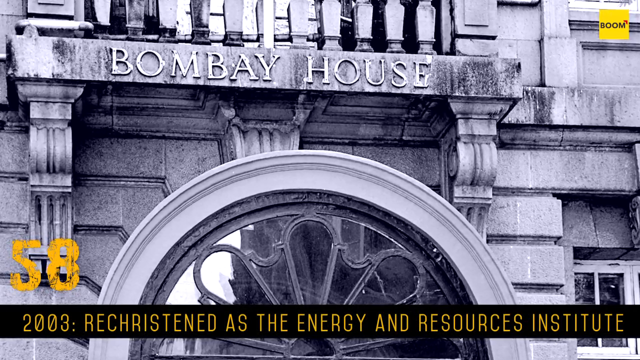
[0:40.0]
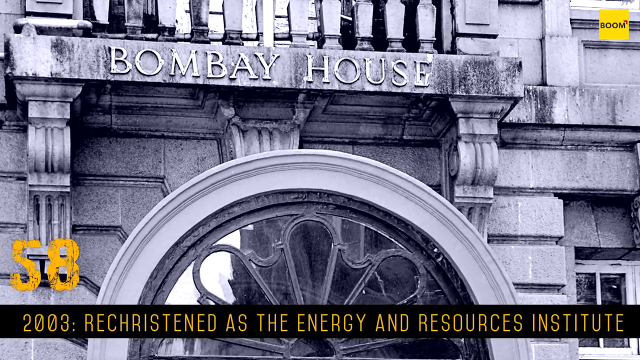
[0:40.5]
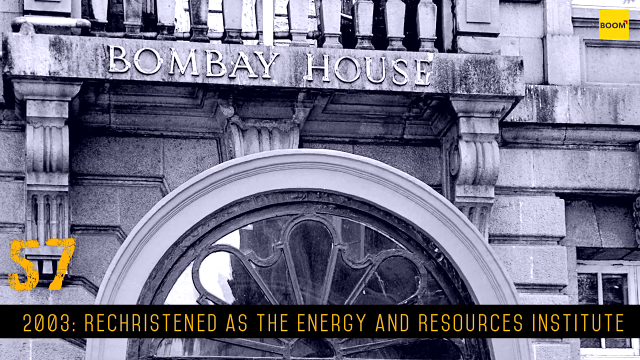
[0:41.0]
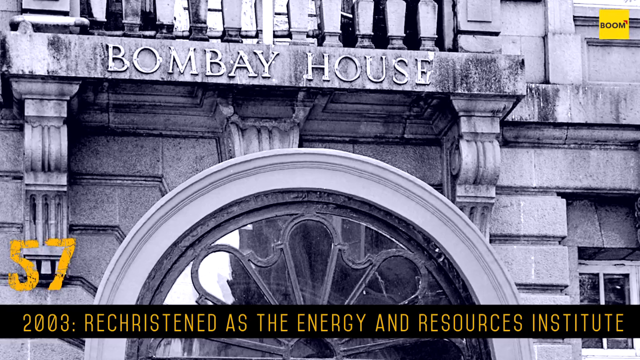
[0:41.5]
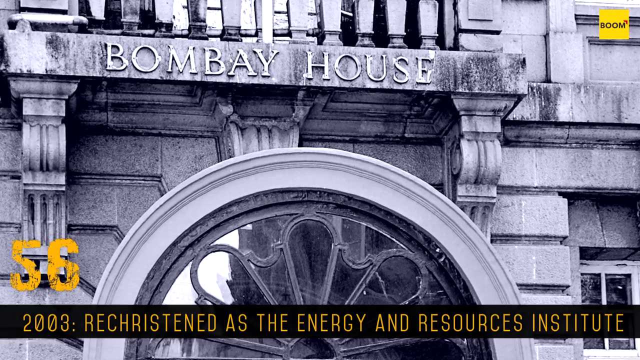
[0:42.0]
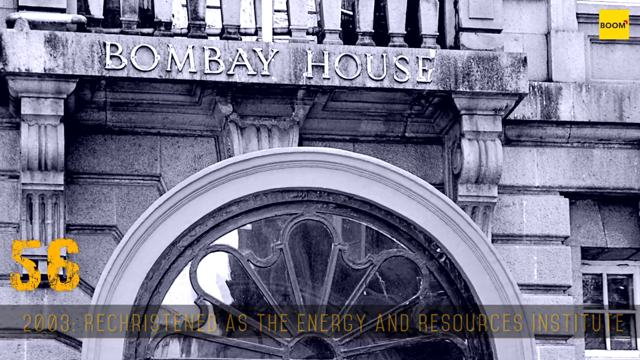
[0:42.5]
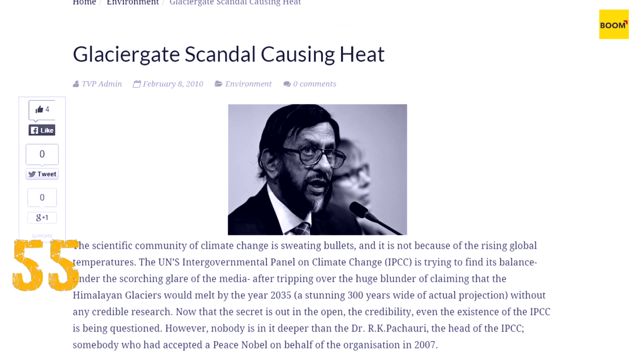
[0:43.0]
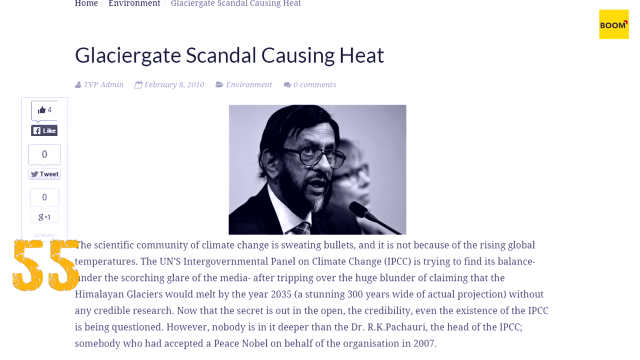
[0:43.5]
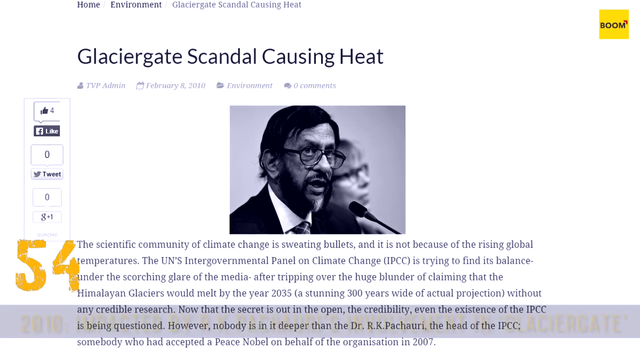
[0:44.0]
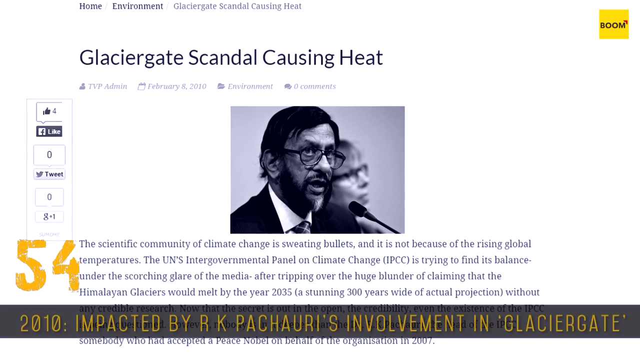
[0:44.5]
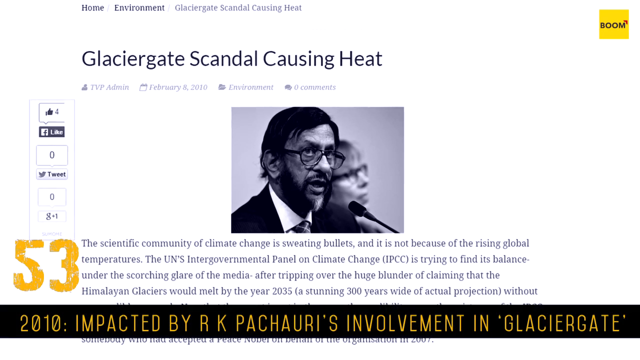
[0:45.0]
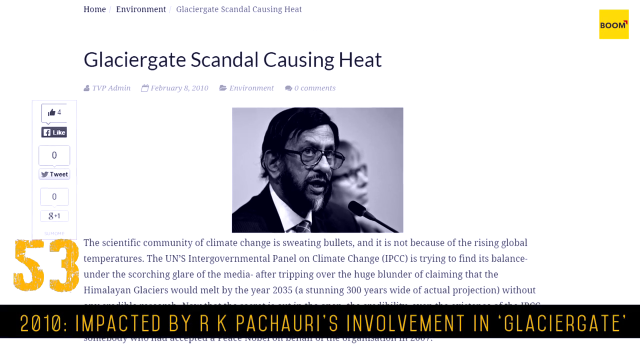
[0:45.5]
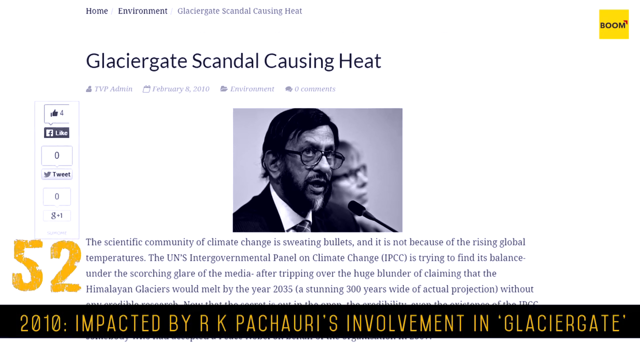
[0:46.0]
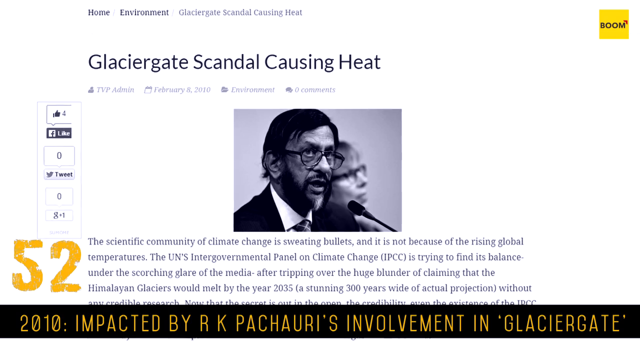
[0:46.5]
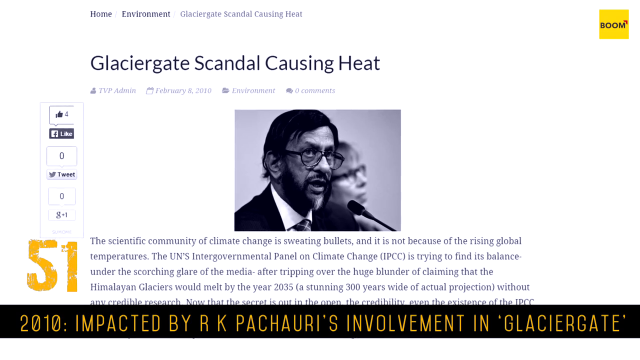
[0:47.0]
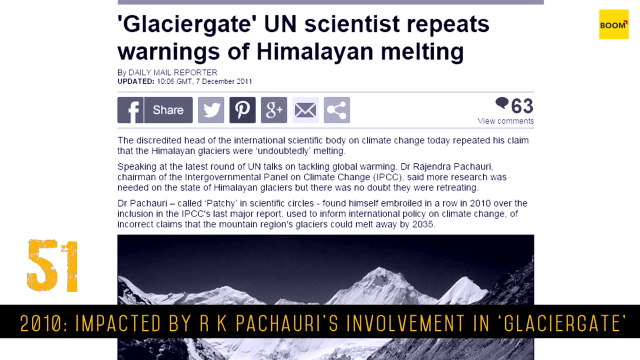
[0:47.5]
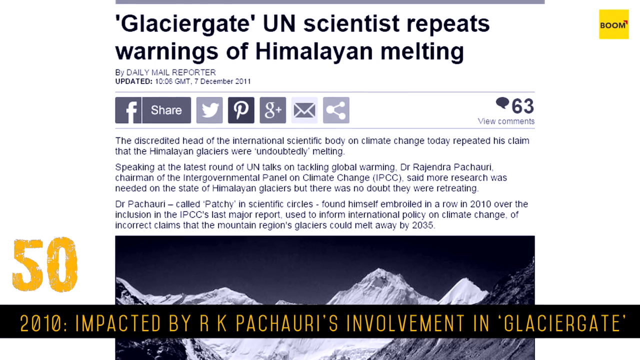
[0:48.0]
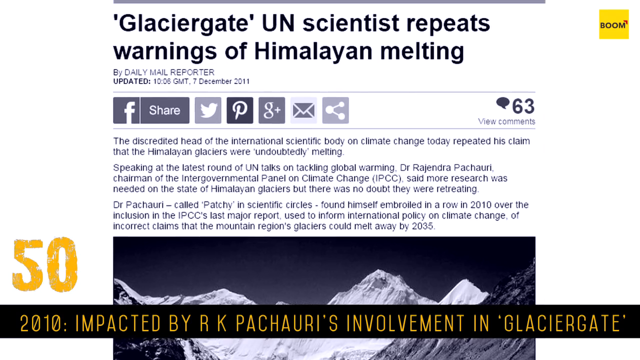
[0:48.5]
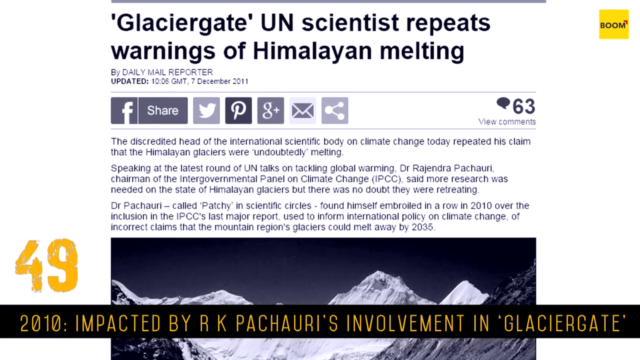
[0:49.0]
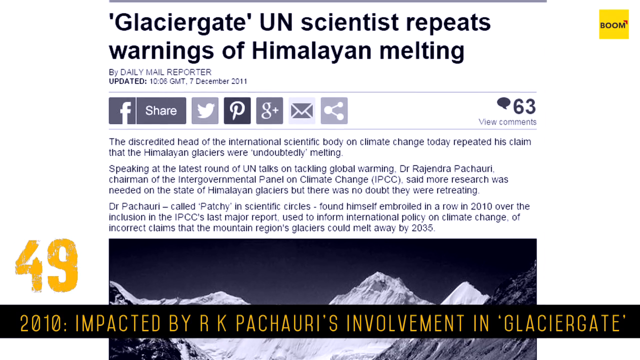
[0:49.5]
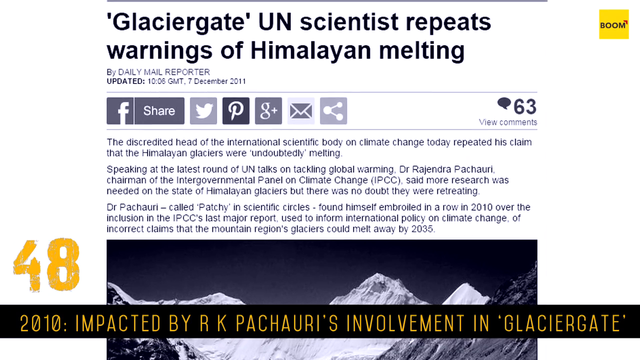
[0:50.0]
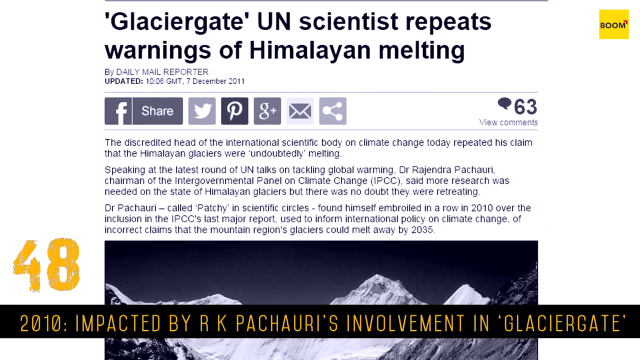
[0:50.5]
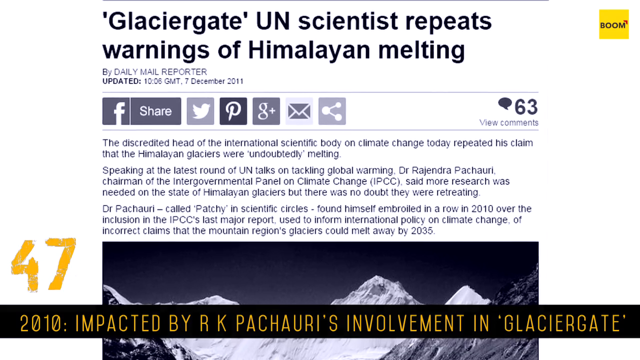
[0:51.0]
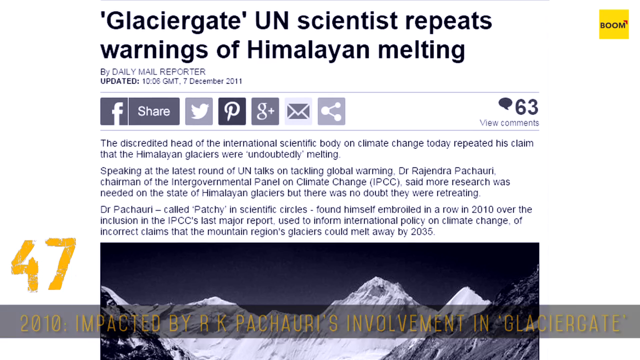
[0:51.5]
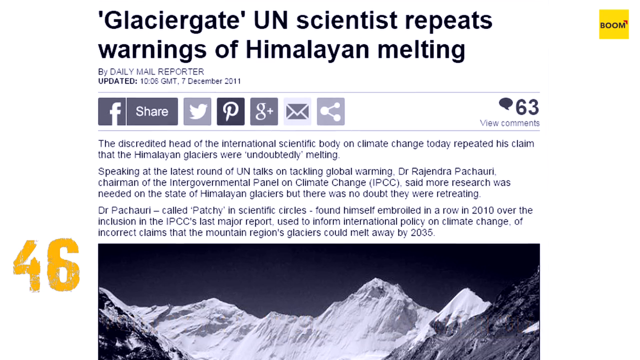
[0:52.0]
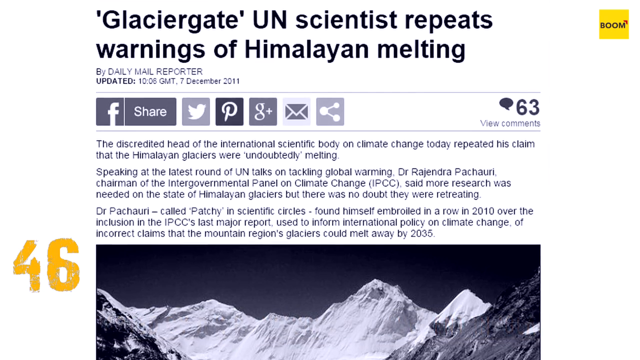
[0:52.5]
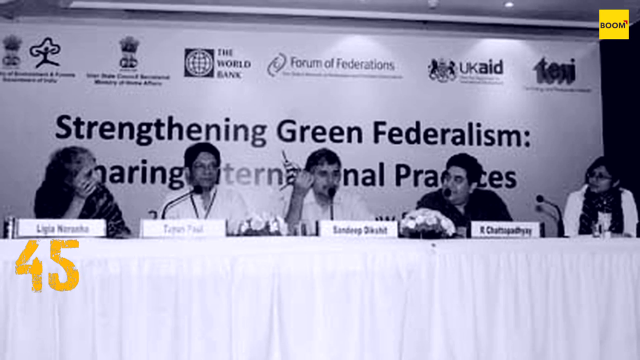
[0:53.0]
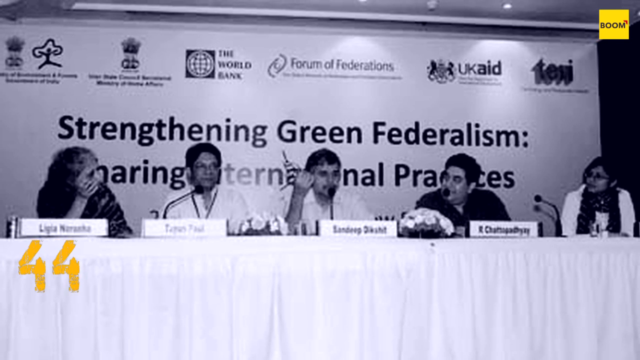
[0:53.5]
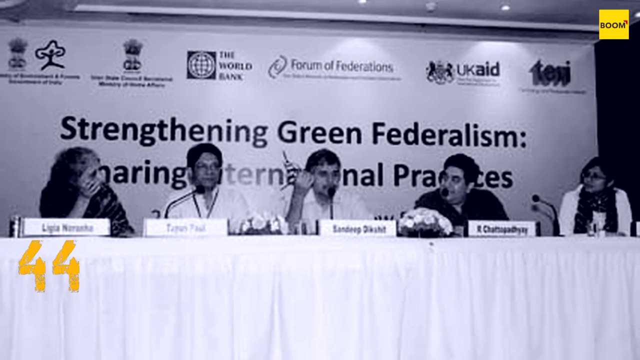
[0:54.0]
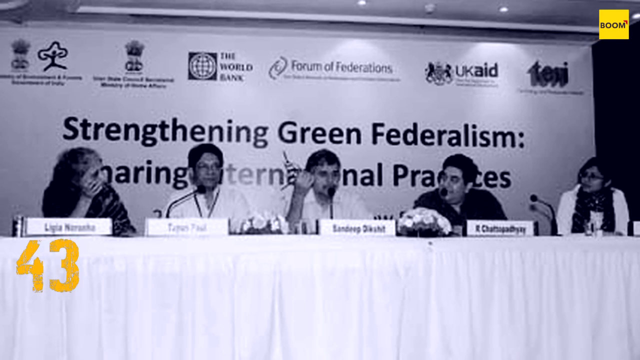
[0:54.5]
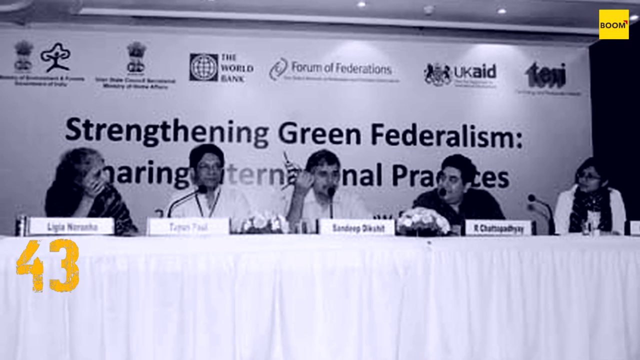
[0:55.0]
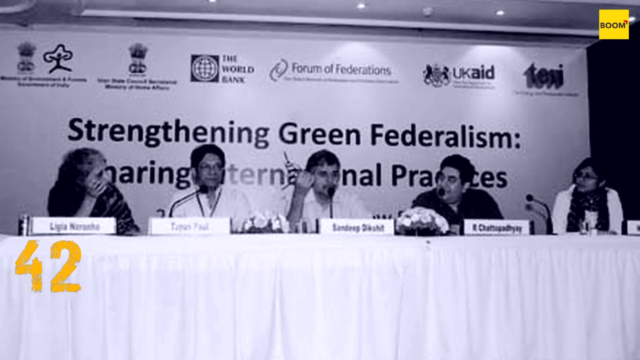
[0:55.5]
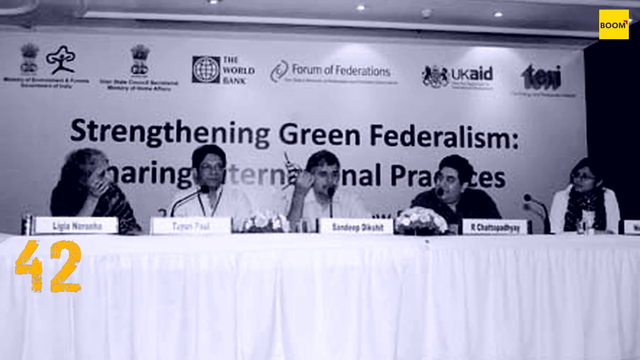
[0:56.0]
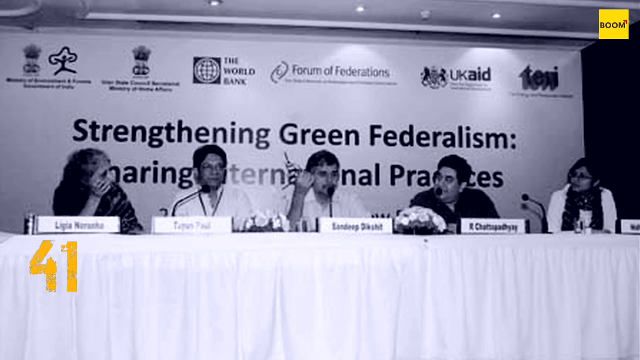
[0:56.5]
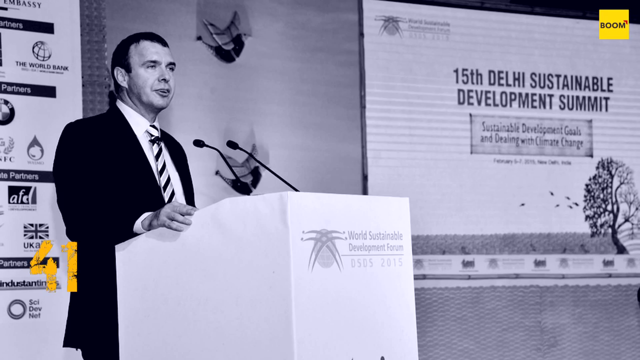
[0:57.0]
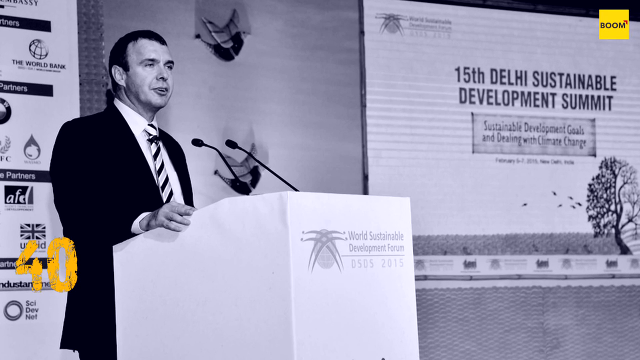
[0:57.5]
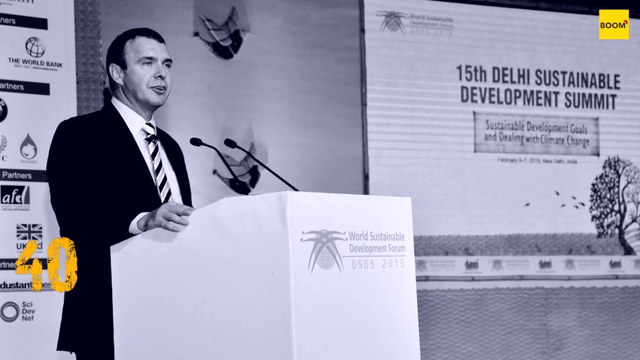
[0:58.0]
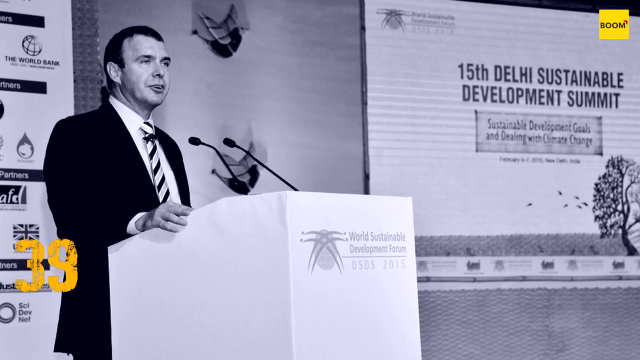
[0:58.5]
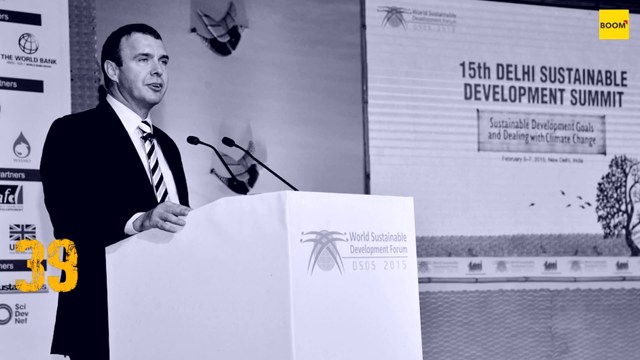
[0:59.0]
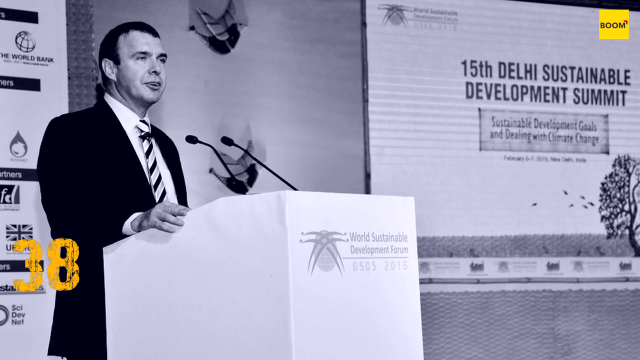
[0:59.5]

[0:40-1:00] A picture of the Bombay Energy and Resources Institute is shown. Then a news item about the Glacier Gate scandal causing heat appears, with the man from the beginning who was accused of sexual harassment, and a banner at the bottom stating that in 2010 it was impacted by BK Pachauri's involvement in Glacier Gate. Another news item reads "Glacier Gate UN scientist repeats warning of Himalayan melting". Next is a photo of what may be a congress, with a banner in the background reading "strengthening green federalism" and other letters blocked by the people at the conference. A man is at the podium, which says "World Sustainable Development Forum", and the presentation is about the Delhi Sustainable Development Summit, with this man part of the summit.